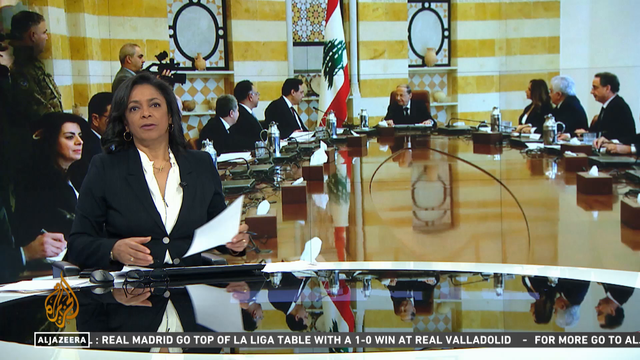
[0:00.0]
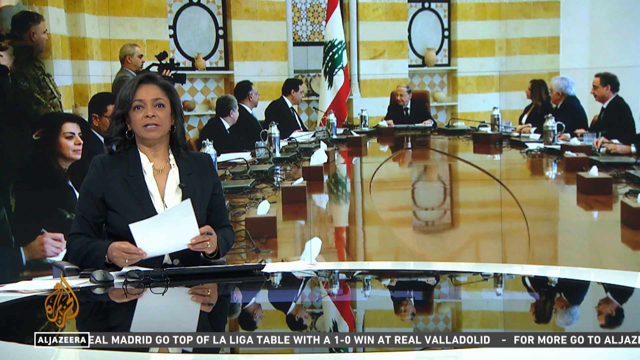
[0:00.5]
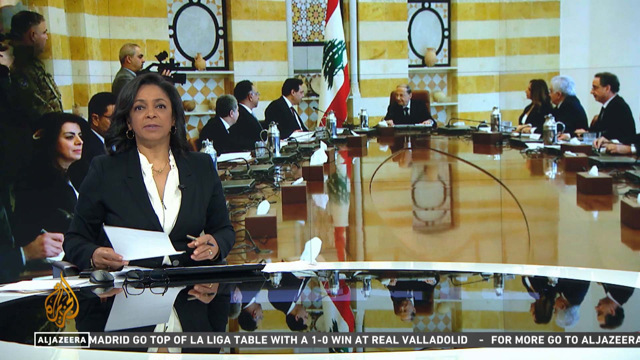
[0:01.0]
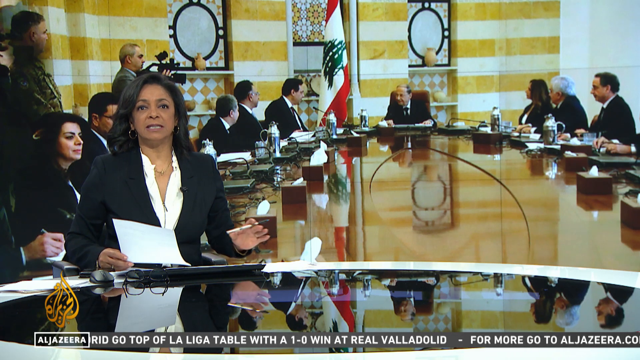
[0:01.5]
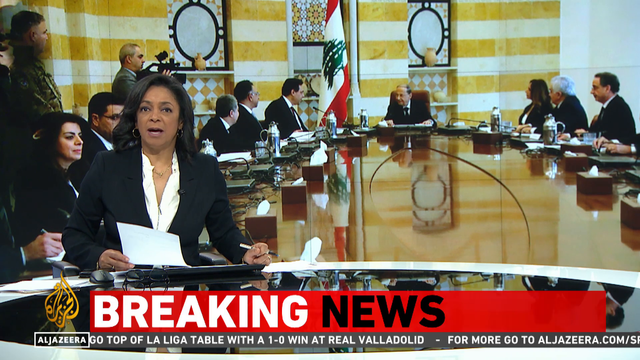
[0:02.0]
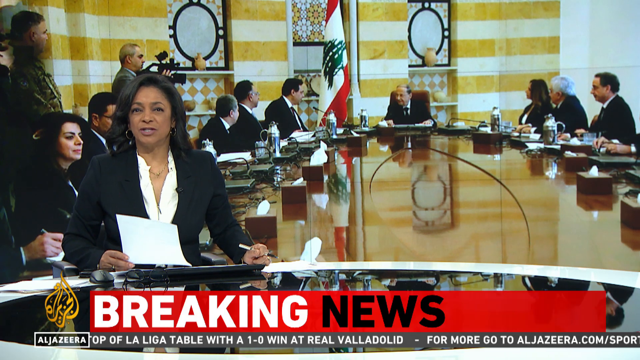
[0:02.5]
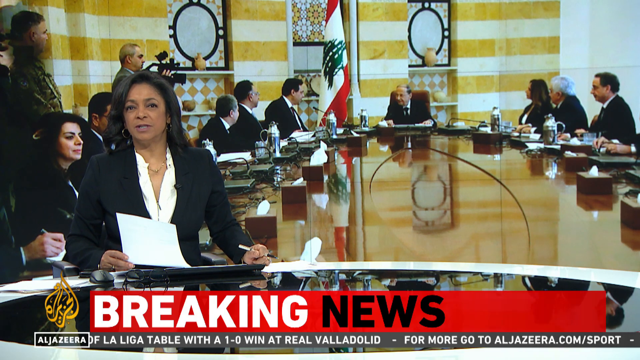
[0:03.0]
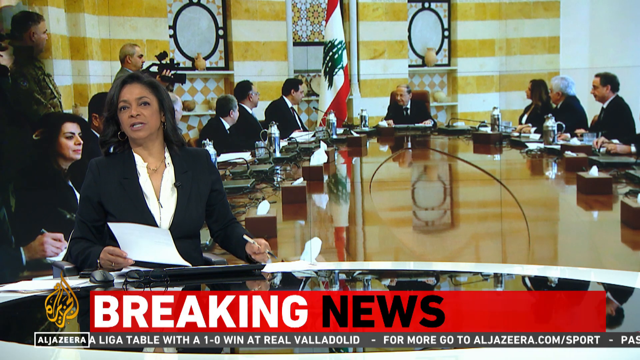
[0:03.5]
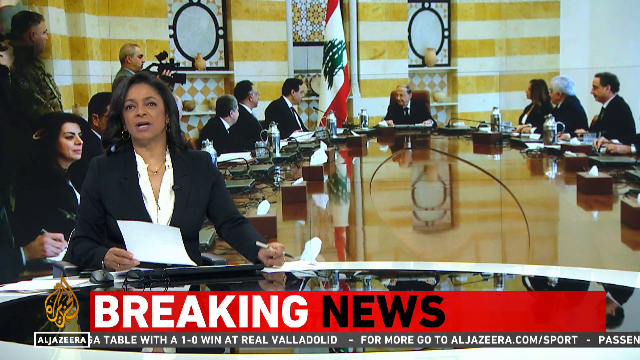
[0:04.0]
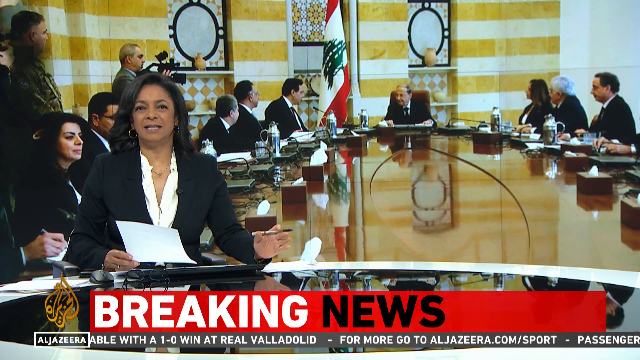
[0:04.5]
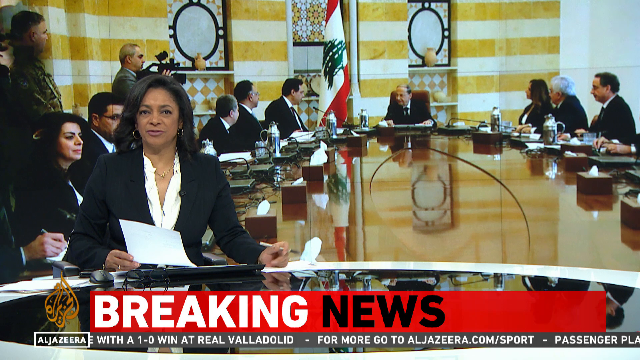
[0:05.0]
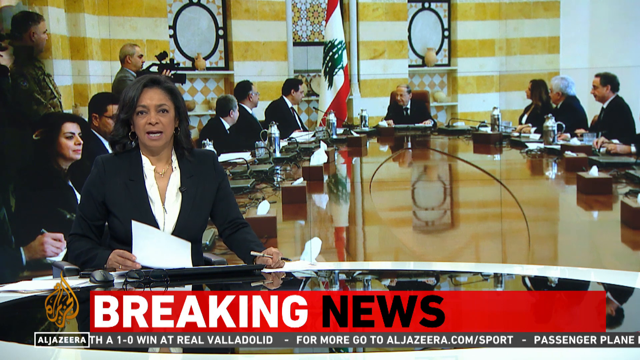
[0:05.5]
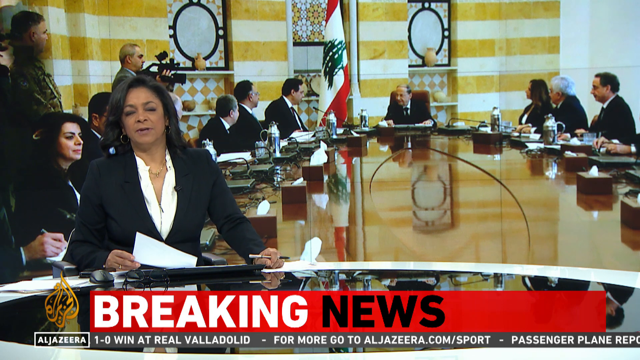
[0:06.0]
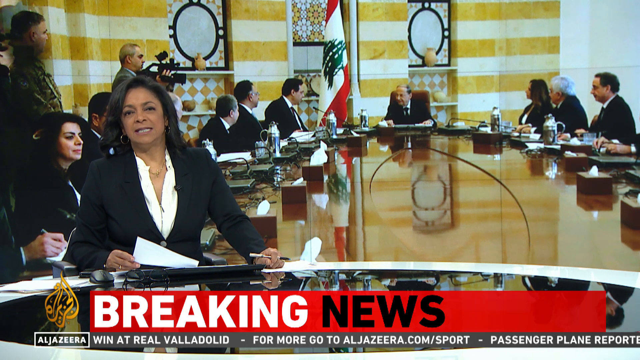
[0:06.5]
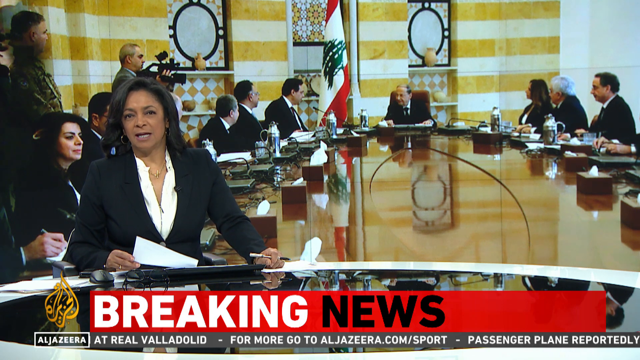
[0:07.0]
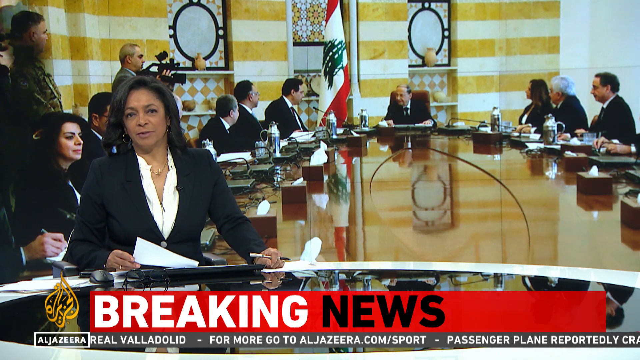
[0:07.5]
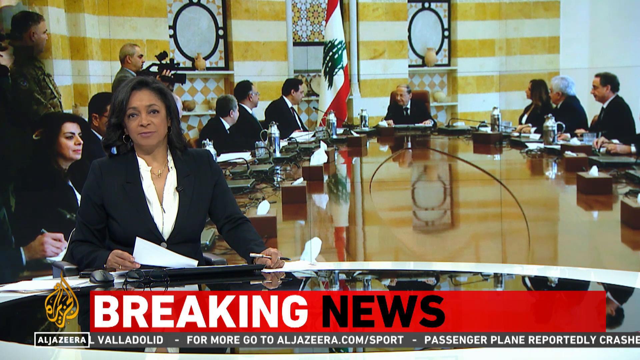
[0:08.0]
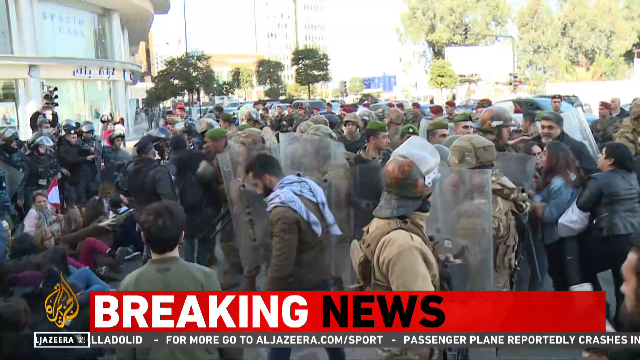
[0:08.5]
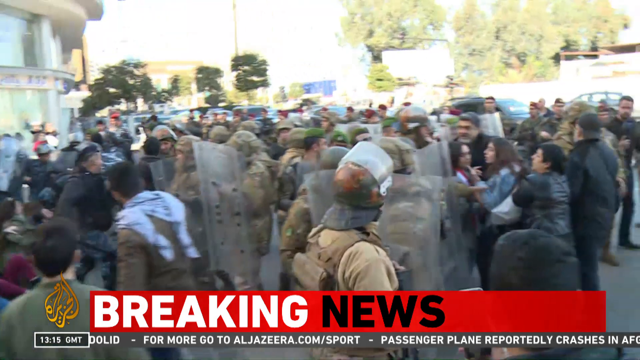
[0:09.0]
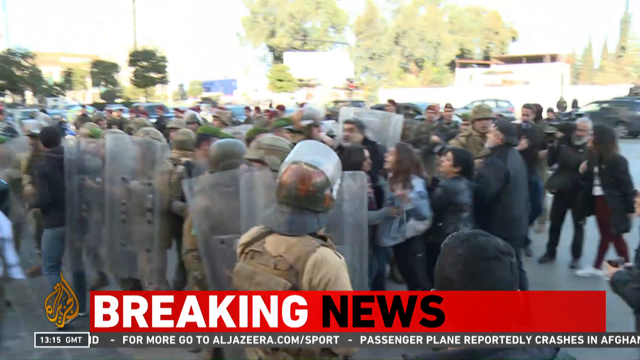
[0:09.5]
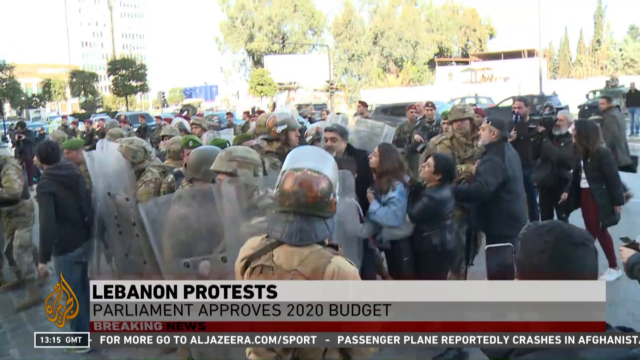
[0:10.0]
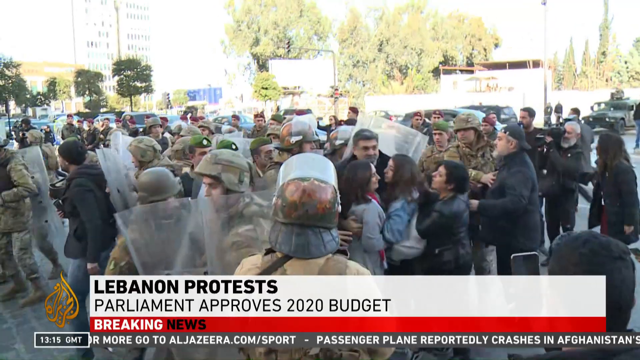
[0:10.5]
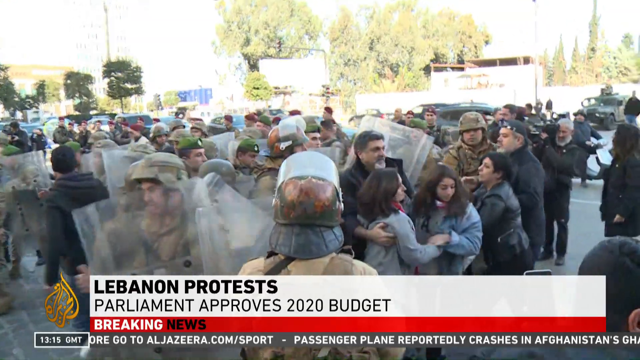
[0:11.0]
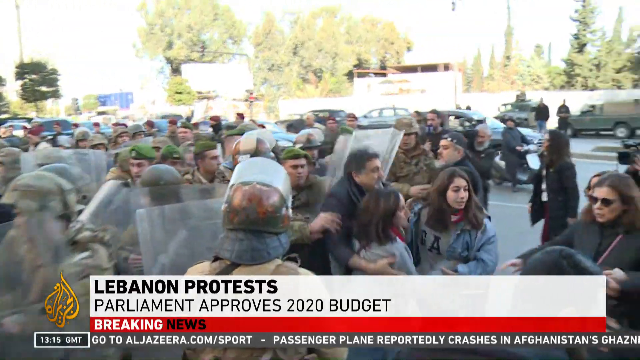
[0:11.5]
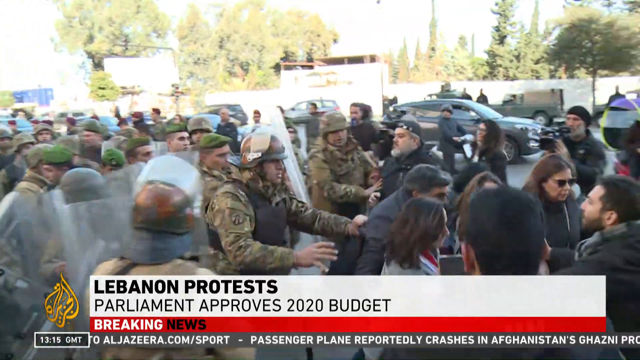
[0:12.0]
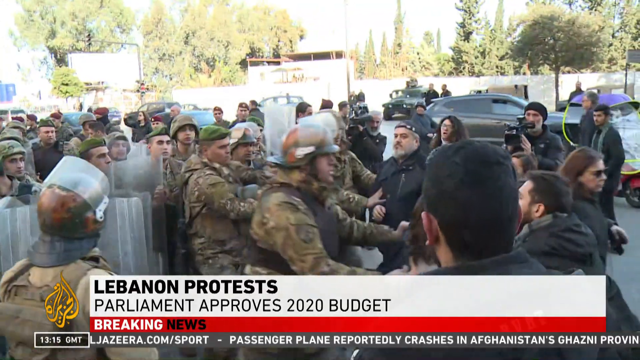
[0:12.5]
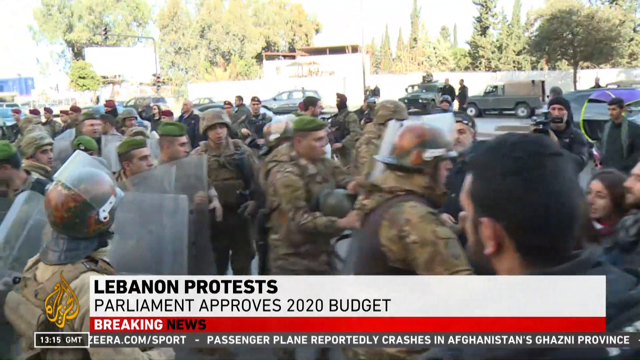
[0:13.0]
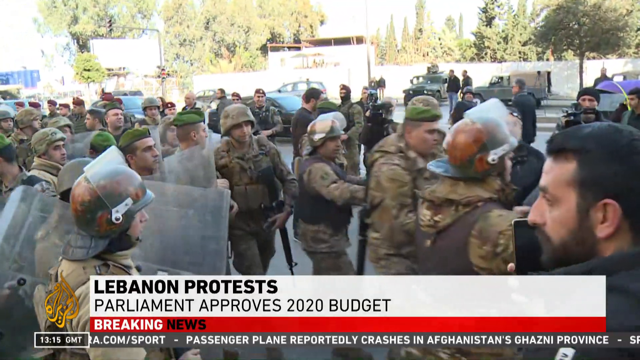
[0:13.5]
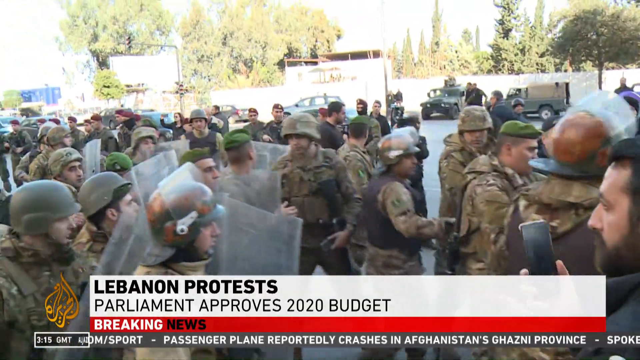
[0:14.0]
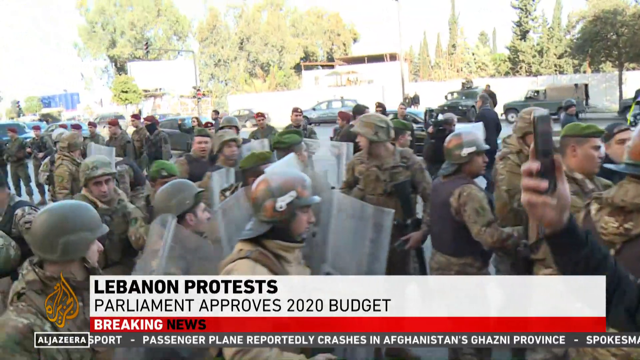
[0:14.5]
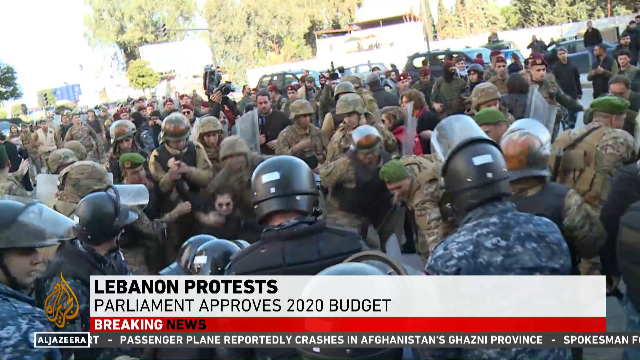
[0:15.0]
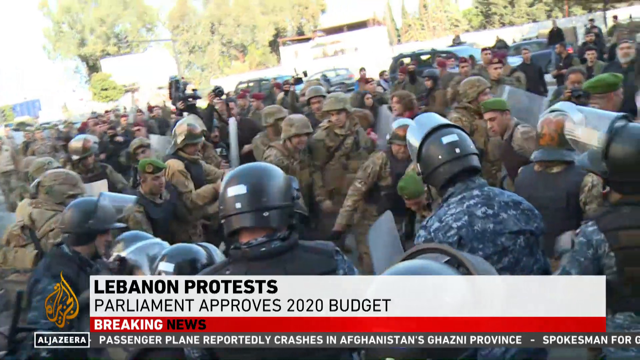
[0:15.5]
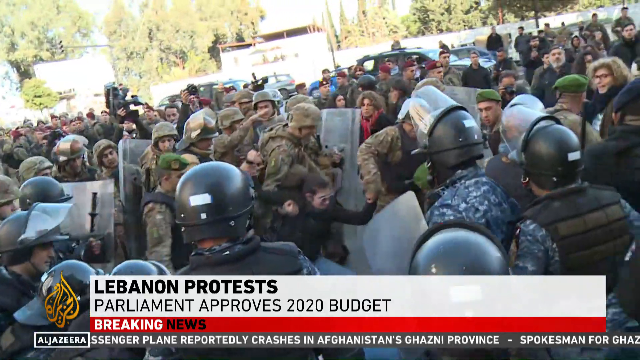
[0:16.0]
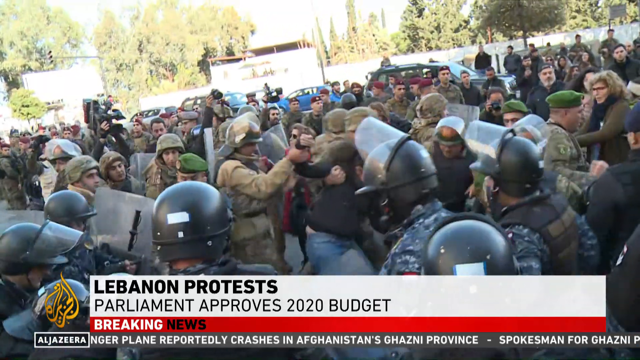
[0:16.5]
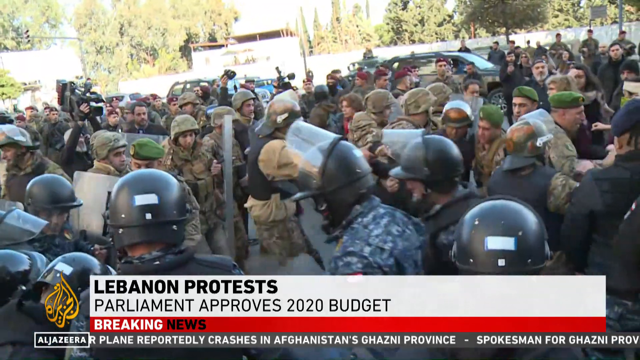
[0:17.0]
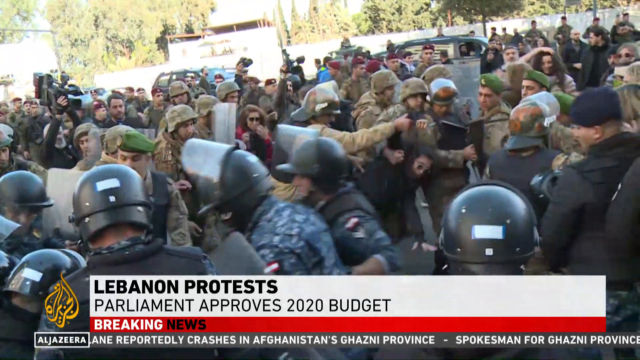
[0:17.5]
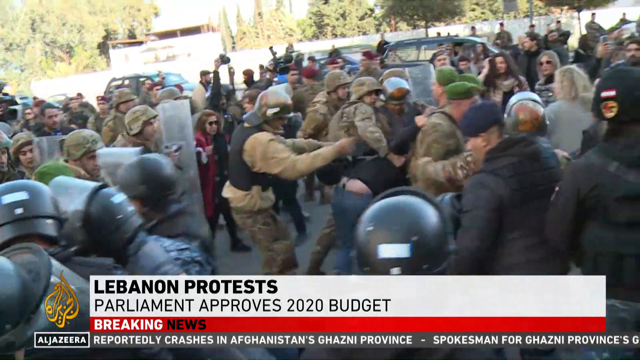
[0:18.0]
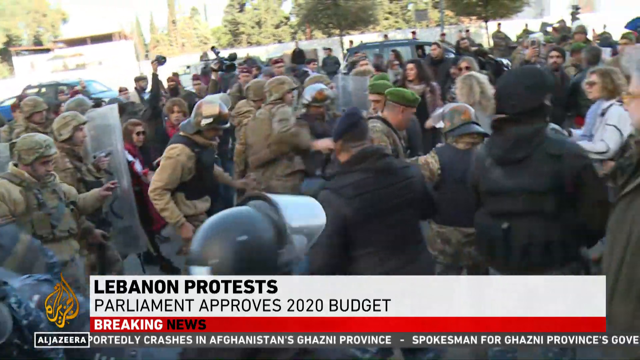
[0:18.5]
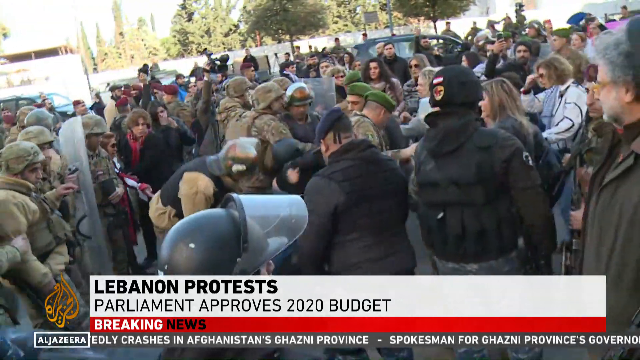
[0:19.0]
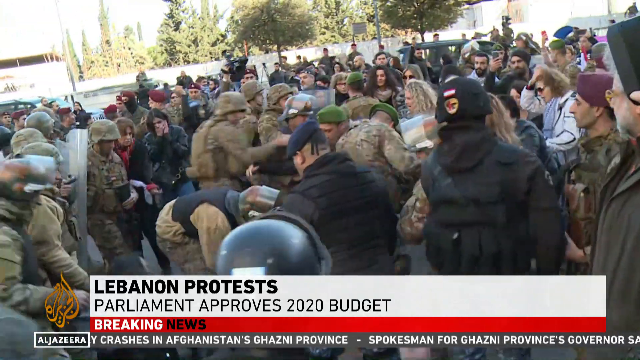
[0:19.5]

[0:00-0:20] A newscast opens with a female reporter sitting at a news desk, looking at the camera and holding a piece of paper. Superimposed behind her is a picture of a room where a large group of men and women sit around a very large conference table, with one person sitting at the head of the table. The room has a yellow-and-white striped wall, a national flag, and two beveled, cut-out areas in the walls holding shells and vases. "Breaking news" comes up. The video then cuts to a scene of a Lebanon protest, with parliament approving the 2020 budget: soldiers in various brown, gray and blue fatigues and riot helmets are fighting with citizens amid large crowds of people.